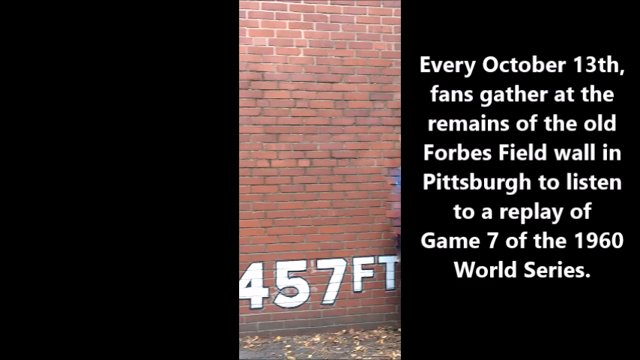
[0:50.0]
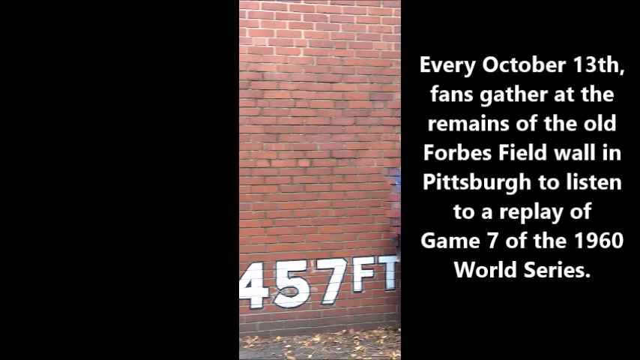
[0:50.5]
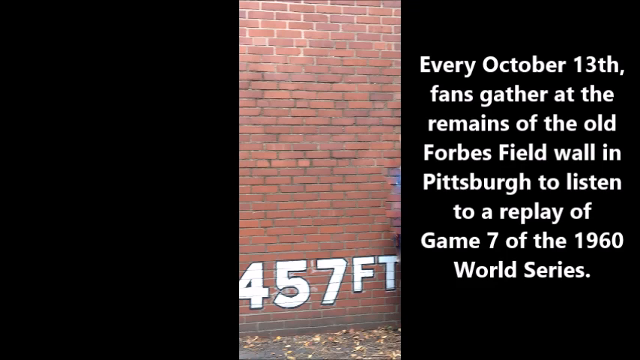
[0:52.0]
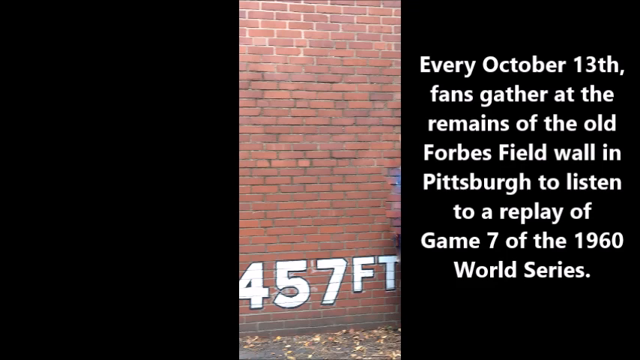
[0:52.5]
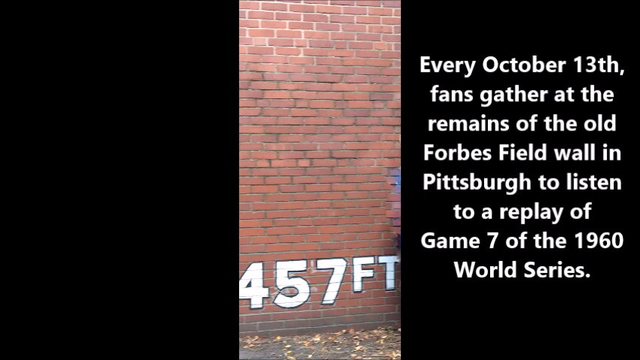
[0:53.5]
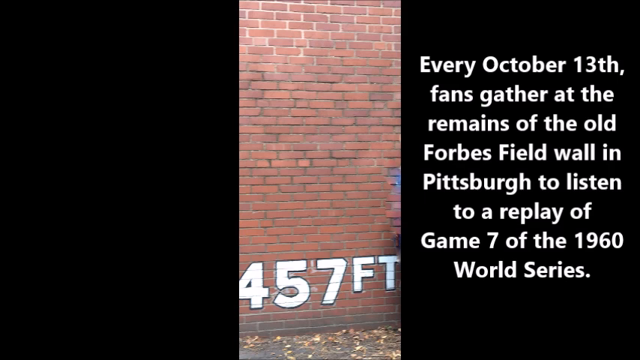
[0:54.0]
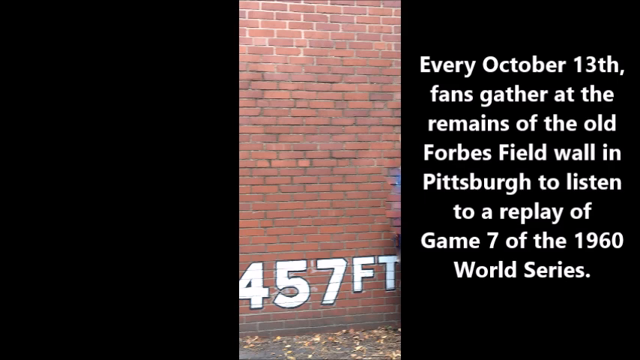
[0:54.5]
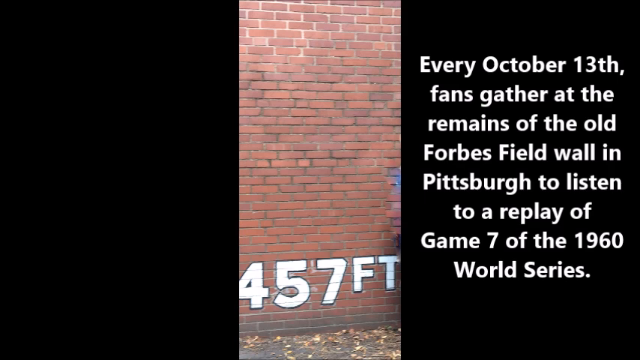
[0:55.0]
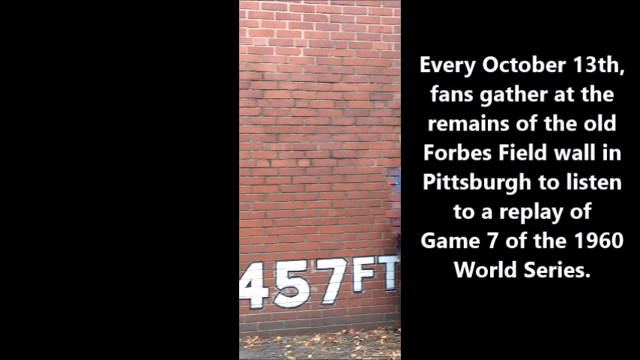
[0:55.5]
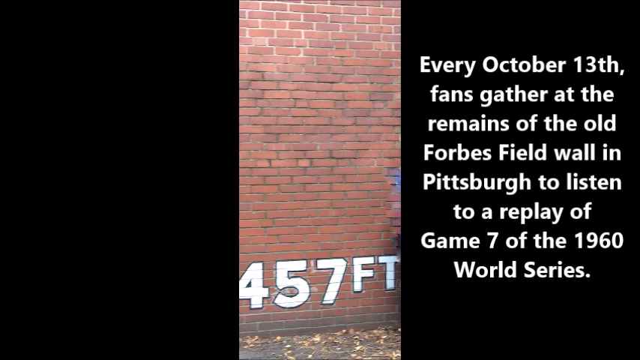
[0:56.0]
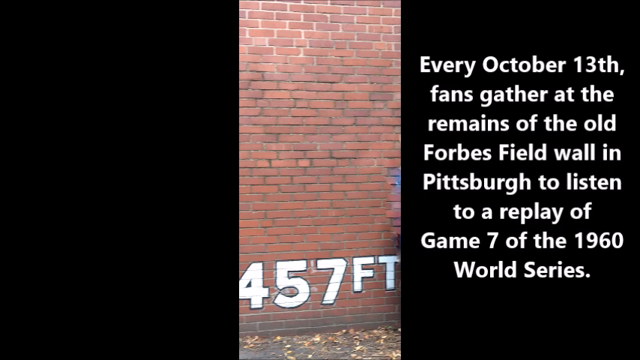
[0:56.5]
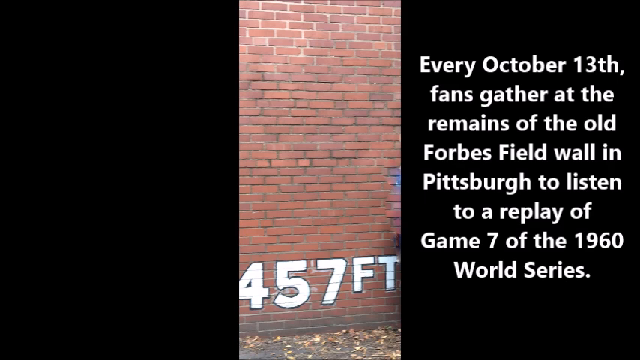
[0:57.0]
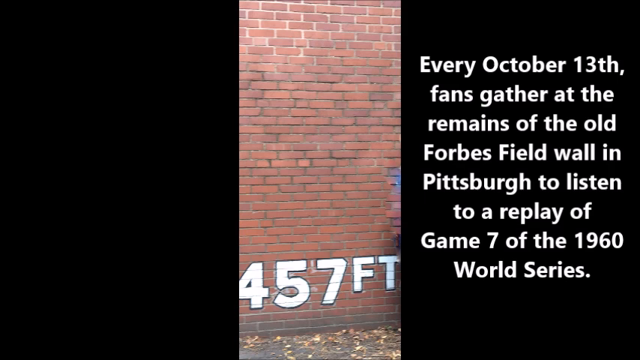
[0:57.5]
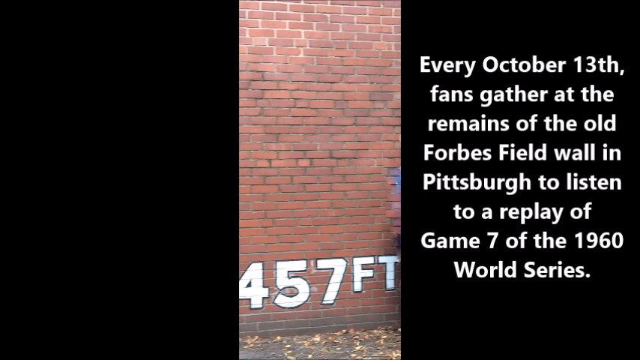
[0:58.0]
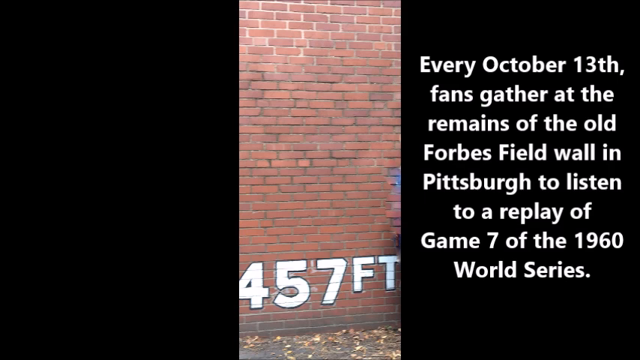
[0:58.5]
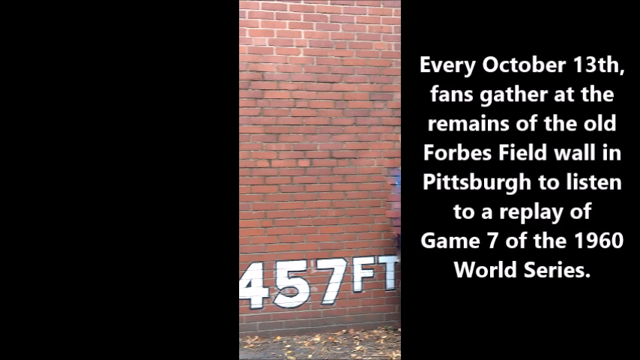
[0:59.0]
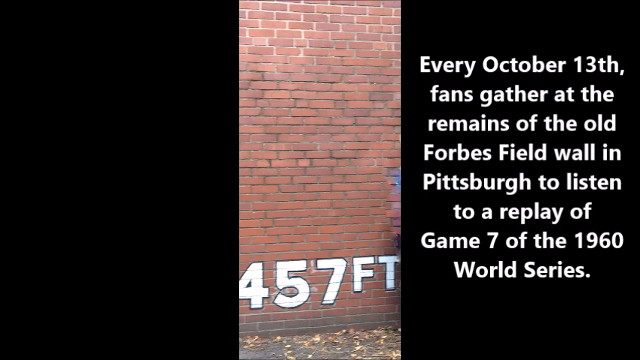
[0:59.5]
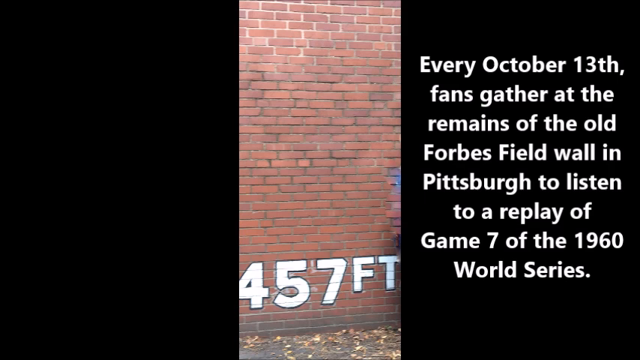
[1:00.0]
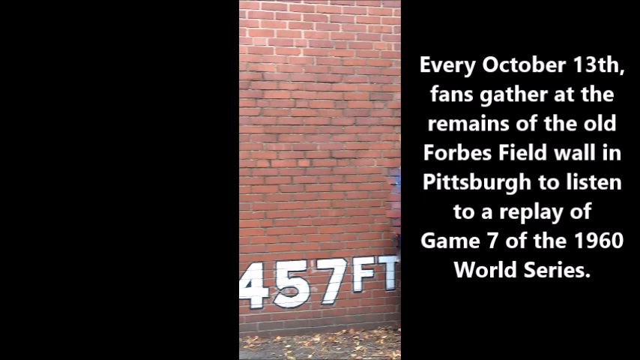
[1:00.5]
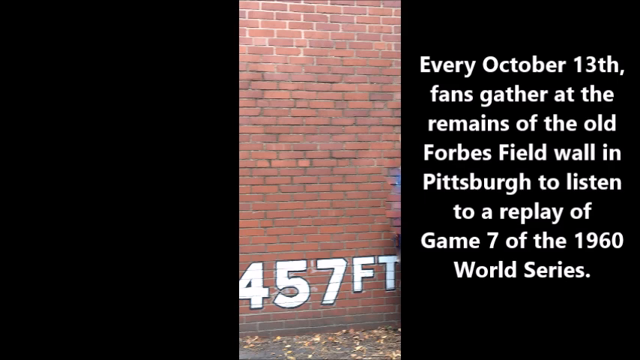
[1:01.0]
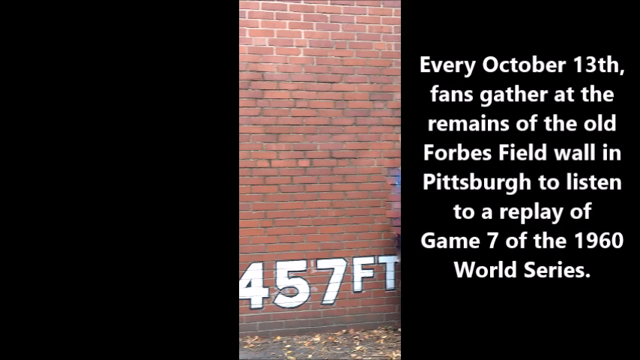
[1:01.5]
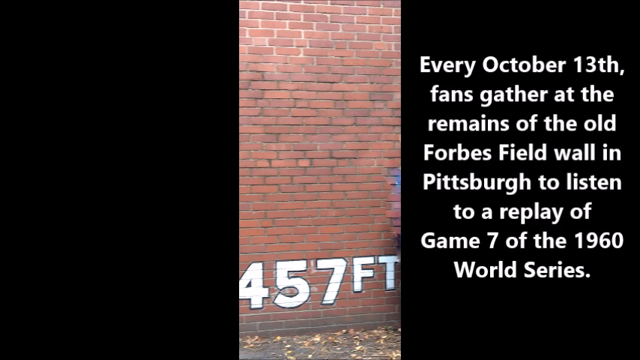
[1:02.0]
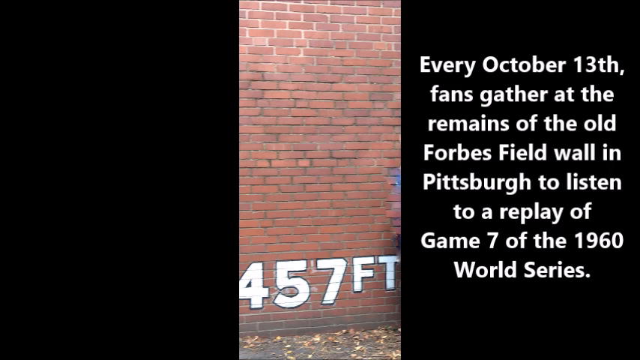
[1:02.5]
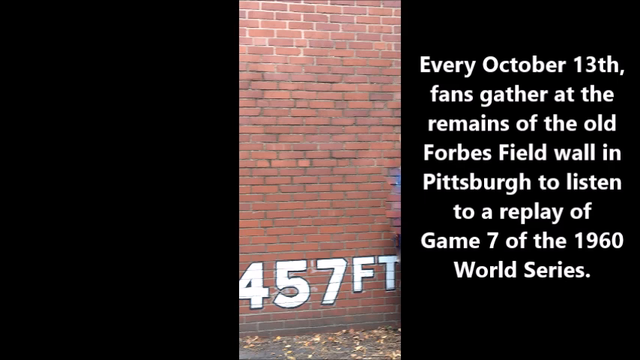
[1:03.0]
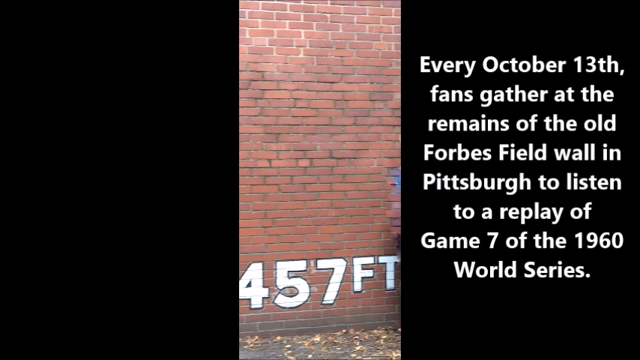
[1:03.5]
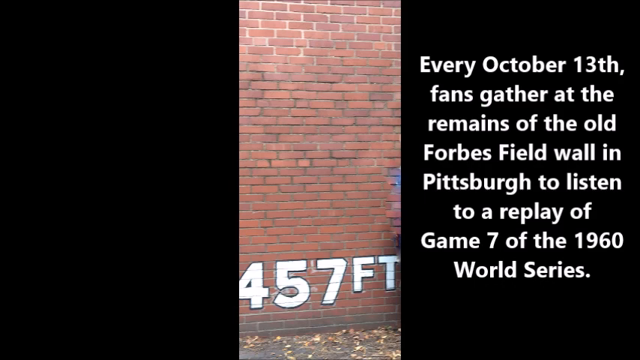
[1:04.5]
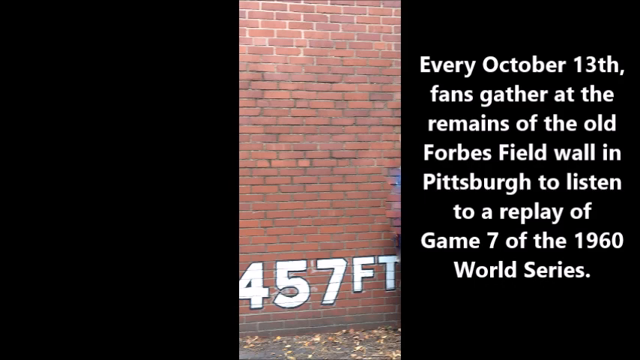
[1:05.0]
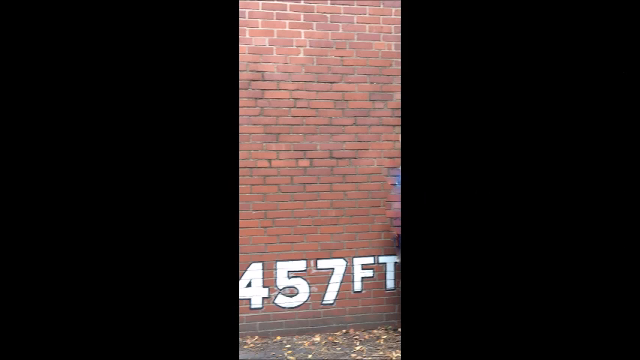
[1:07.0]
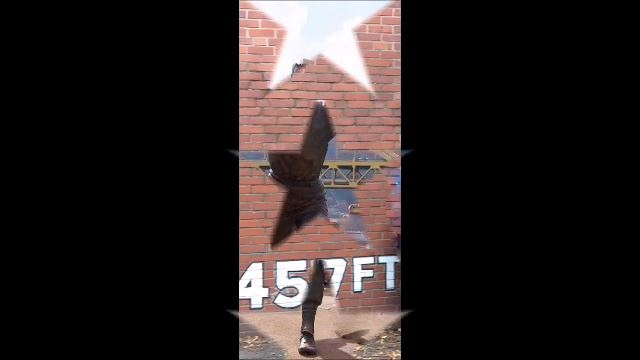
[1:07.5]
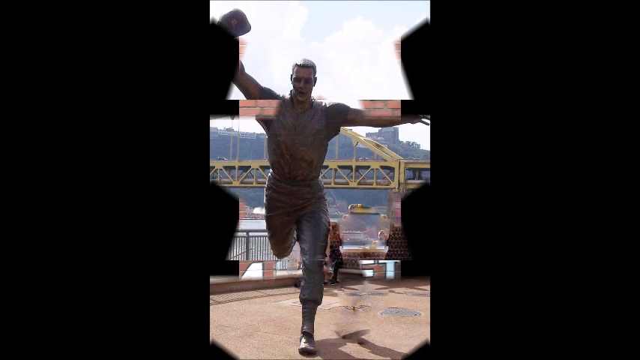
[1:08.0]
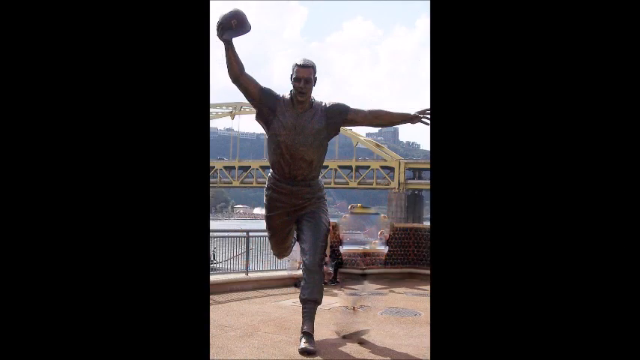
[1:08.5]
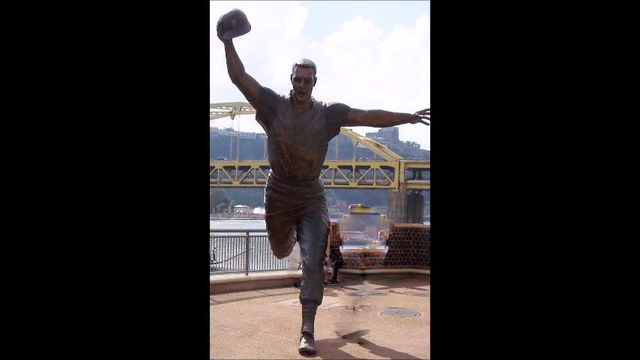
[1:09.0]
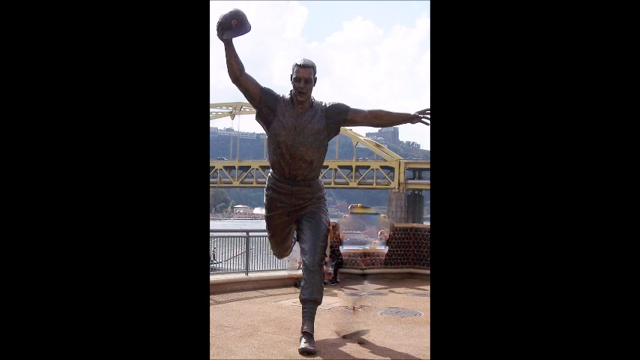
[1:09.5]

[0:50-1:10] The image of the red brick wall, with 470 FT written in white at its base, remains along with the explanatory text on the black section on the right for some time. Another digital effect then transitions to the next shot: three stars, one above the other, gradually grow out of the centre of the screen, with the next image inside them. This image is also in the centre of the screen but slightly wider than the previous one. It appears to be a colour photograph of a bronze statue of a baseball player running towards the camera. His left foot is on the ground and his right leg is bent behind him. His left arm is held out to the side and his right arm is above him, holding his cap. He is standing on an area of pavement with railings behind him, and behind him is what appears to be a river with a large yellow metal bridge spanning horizontally across.